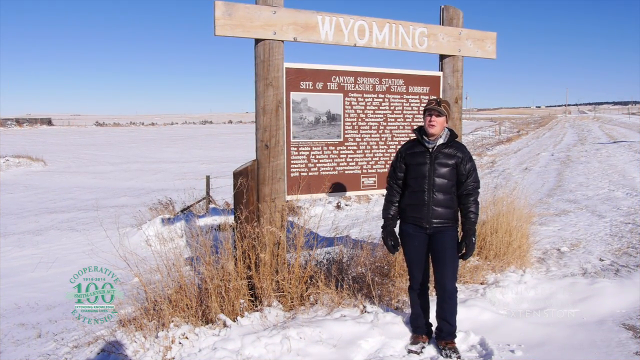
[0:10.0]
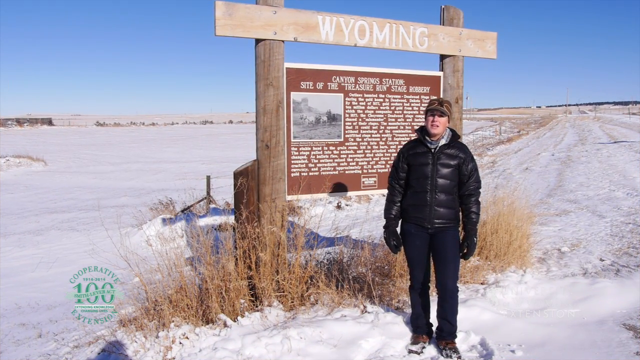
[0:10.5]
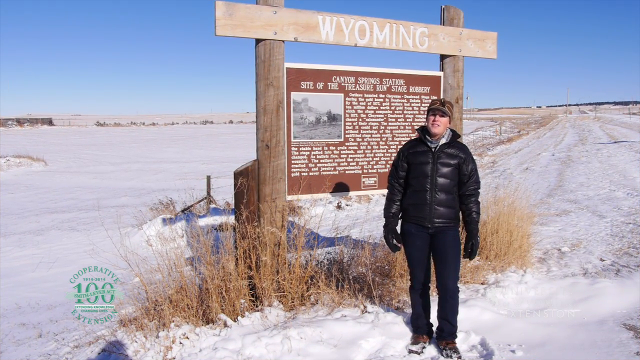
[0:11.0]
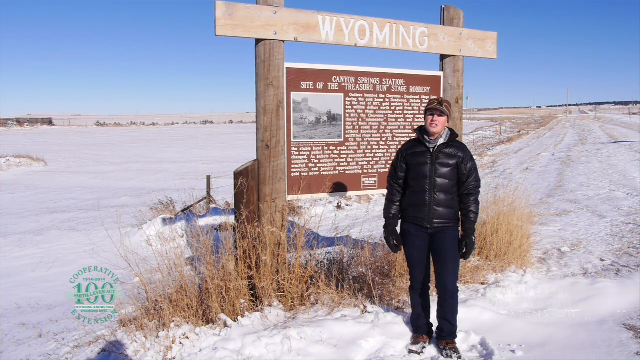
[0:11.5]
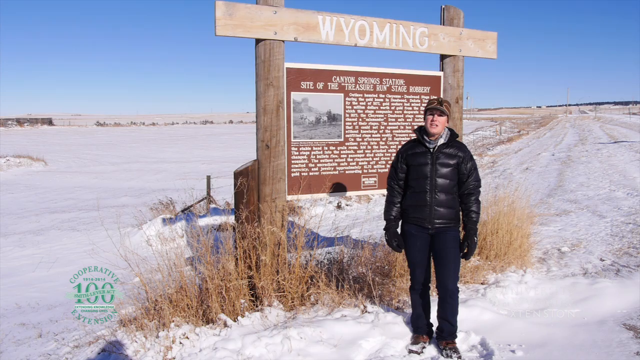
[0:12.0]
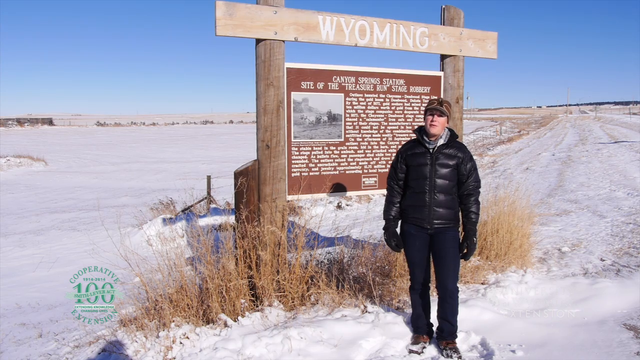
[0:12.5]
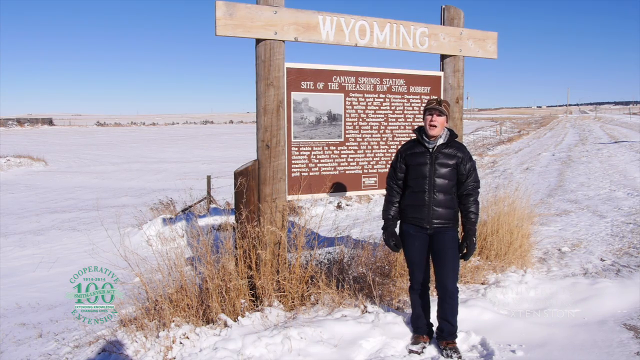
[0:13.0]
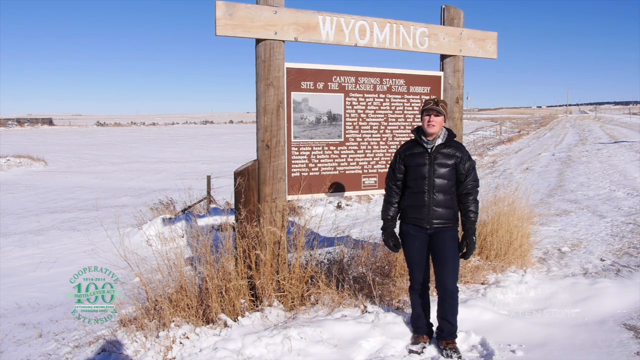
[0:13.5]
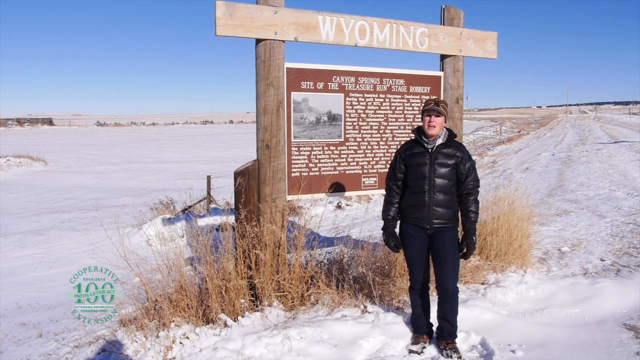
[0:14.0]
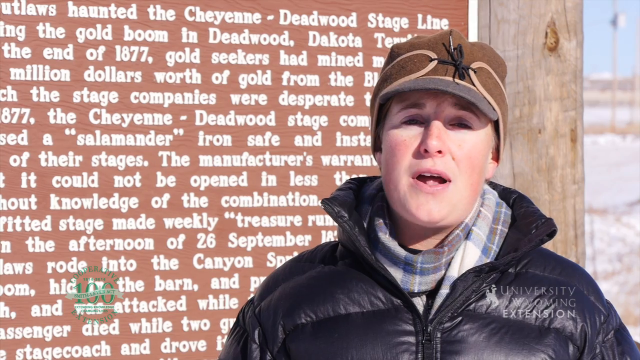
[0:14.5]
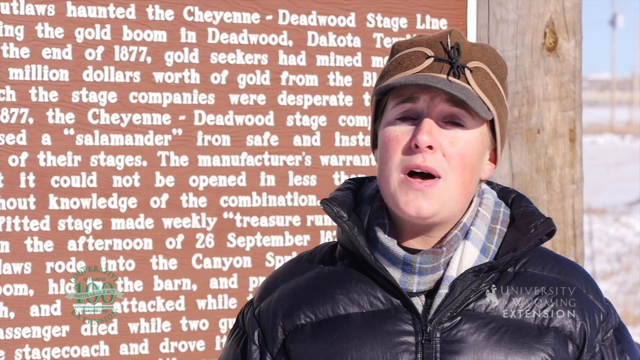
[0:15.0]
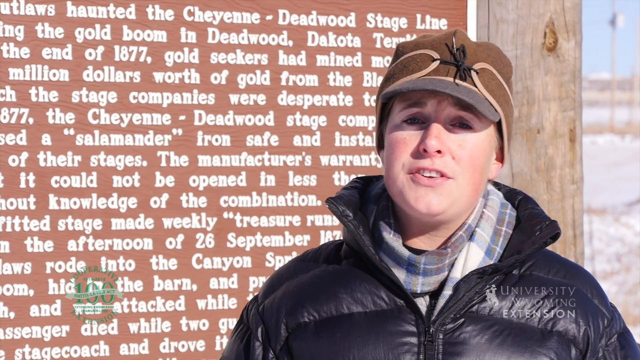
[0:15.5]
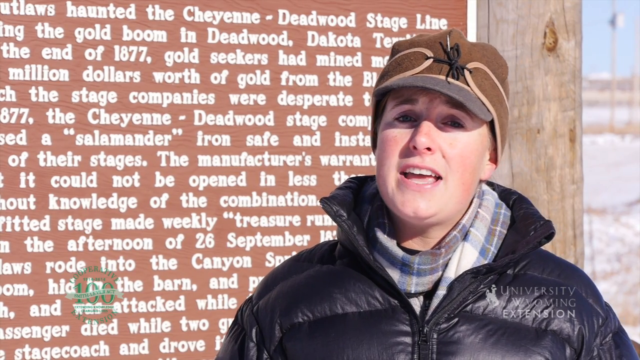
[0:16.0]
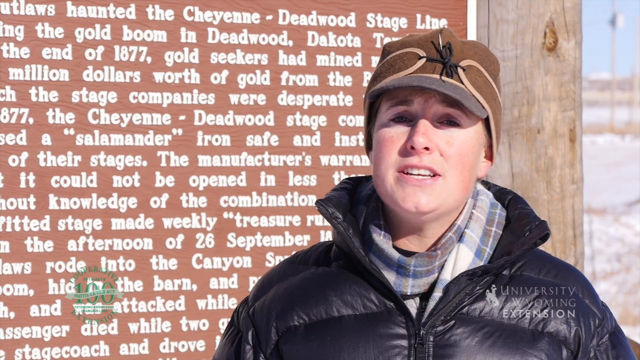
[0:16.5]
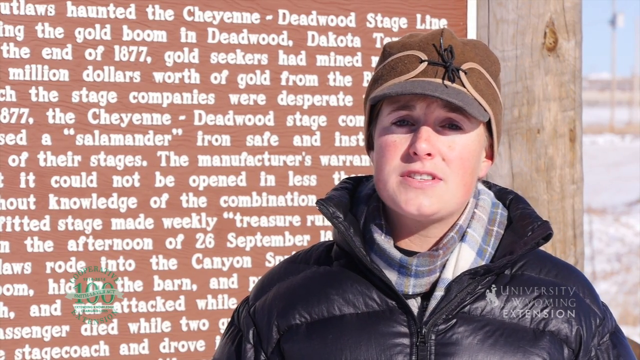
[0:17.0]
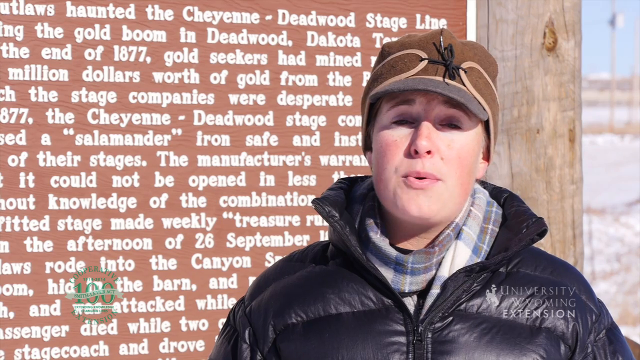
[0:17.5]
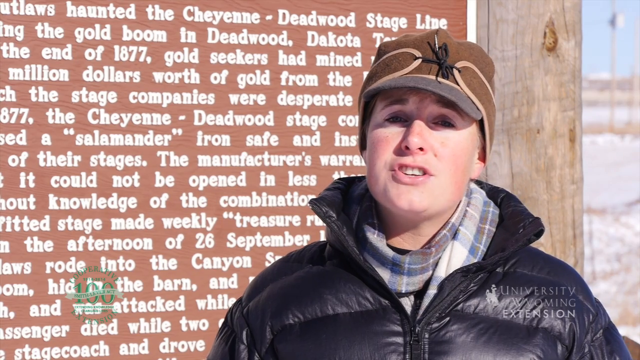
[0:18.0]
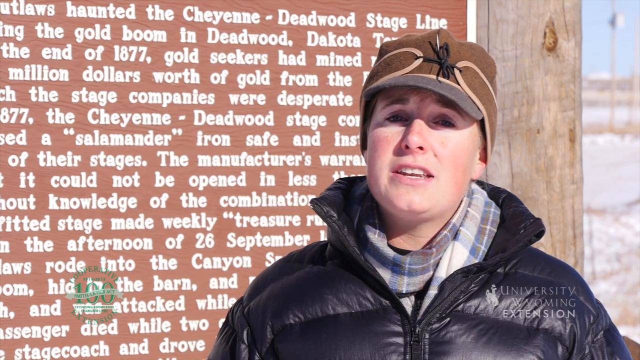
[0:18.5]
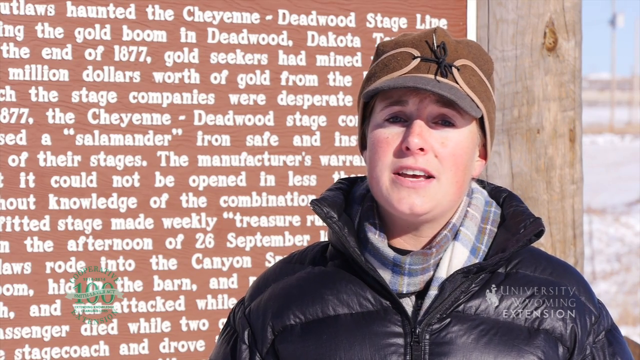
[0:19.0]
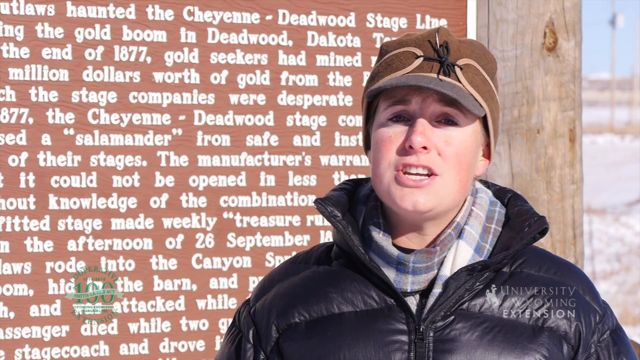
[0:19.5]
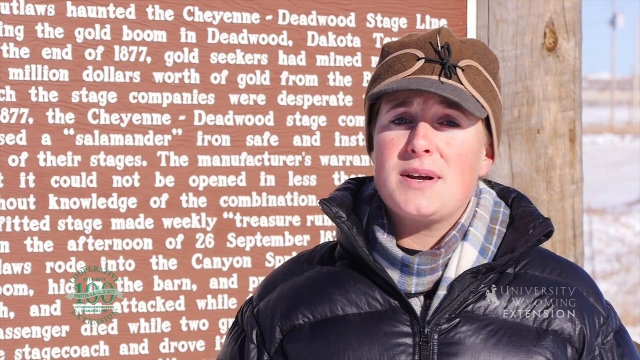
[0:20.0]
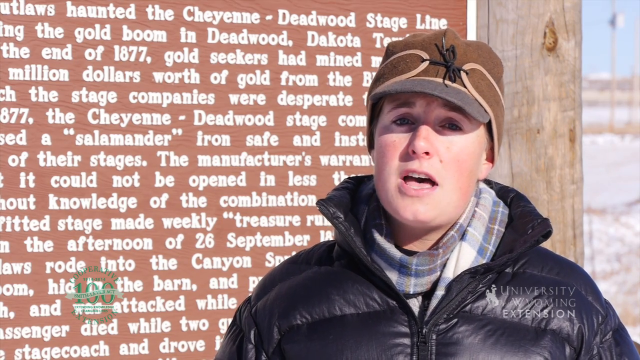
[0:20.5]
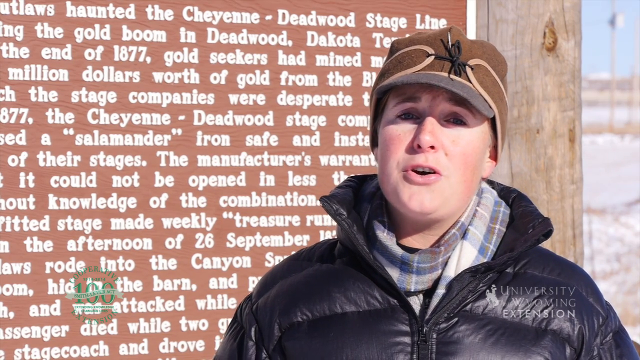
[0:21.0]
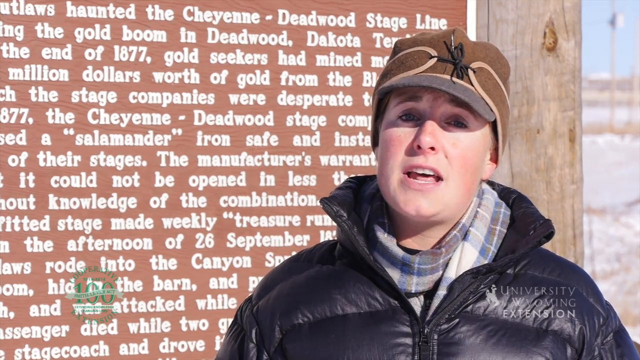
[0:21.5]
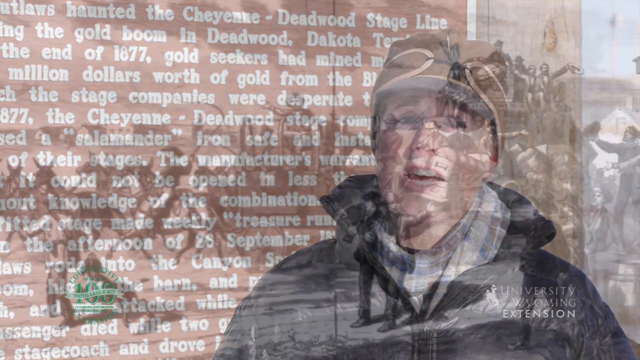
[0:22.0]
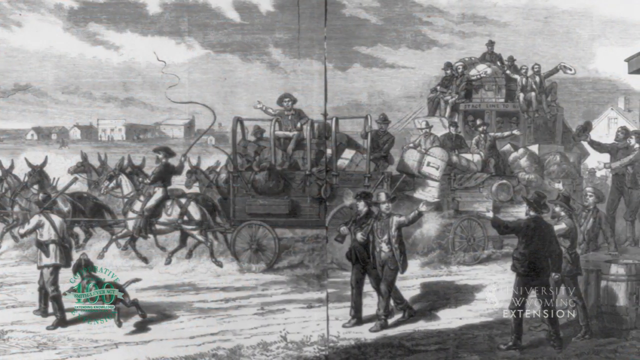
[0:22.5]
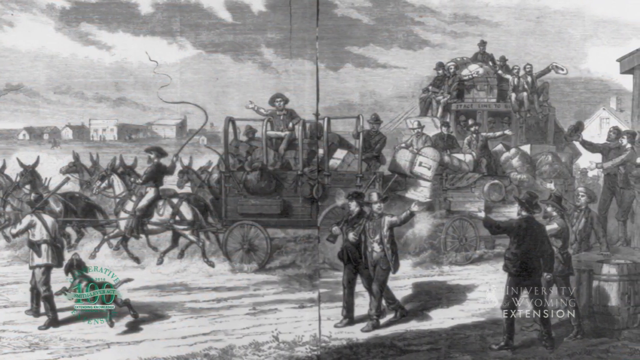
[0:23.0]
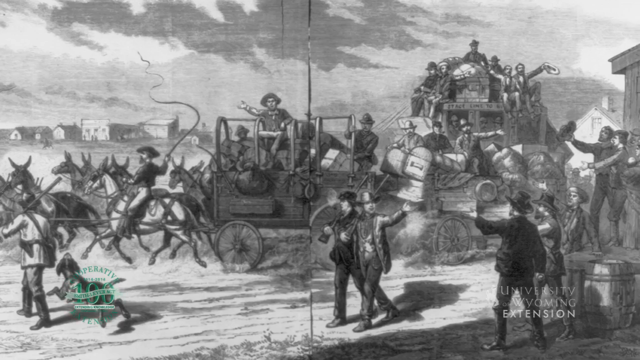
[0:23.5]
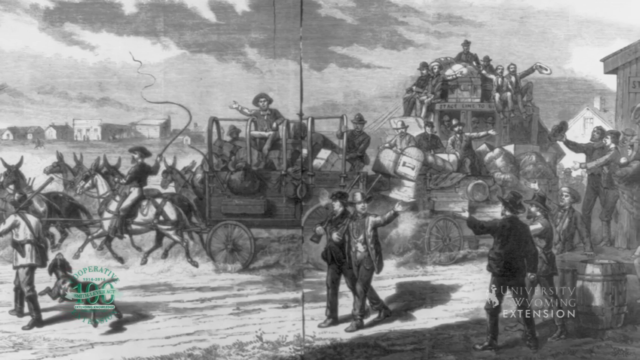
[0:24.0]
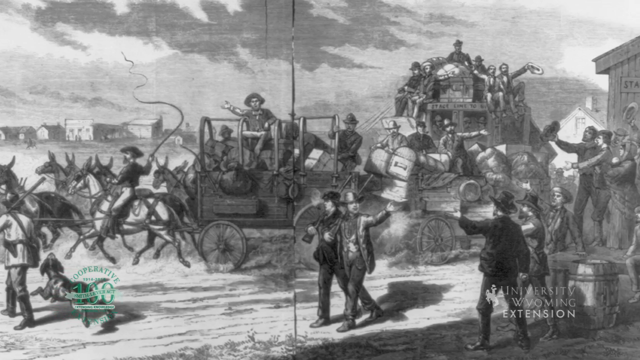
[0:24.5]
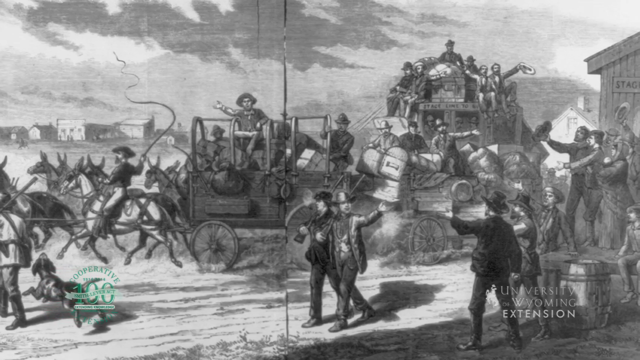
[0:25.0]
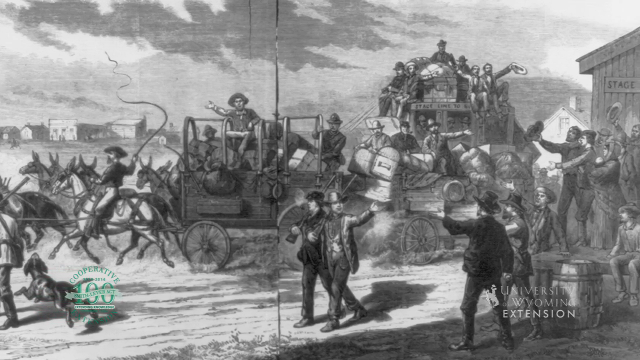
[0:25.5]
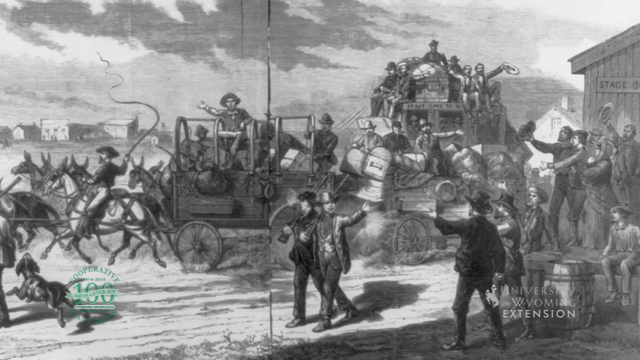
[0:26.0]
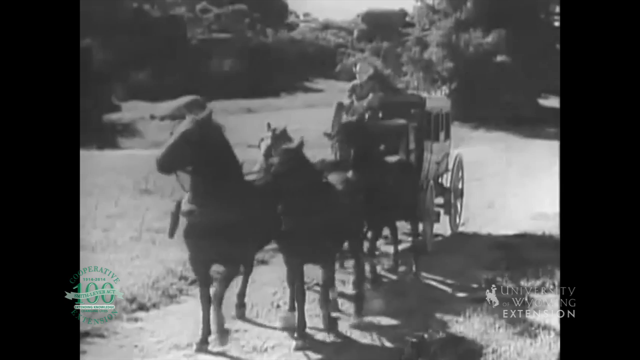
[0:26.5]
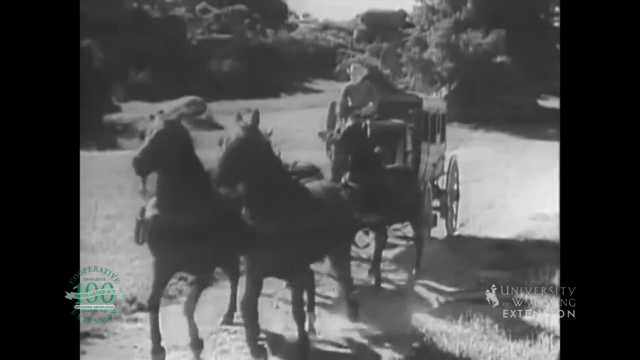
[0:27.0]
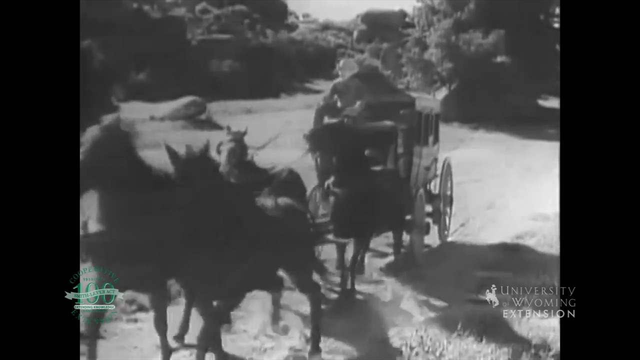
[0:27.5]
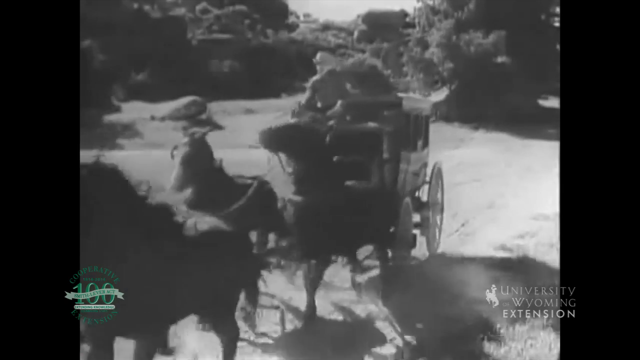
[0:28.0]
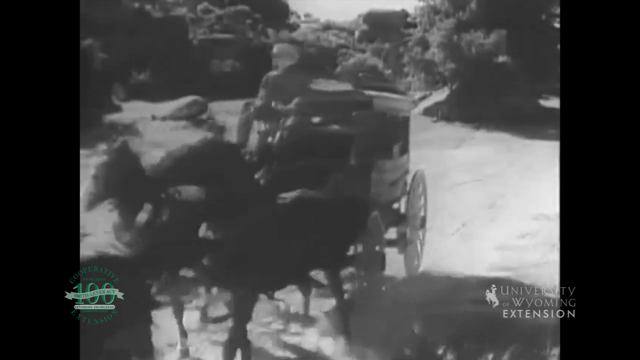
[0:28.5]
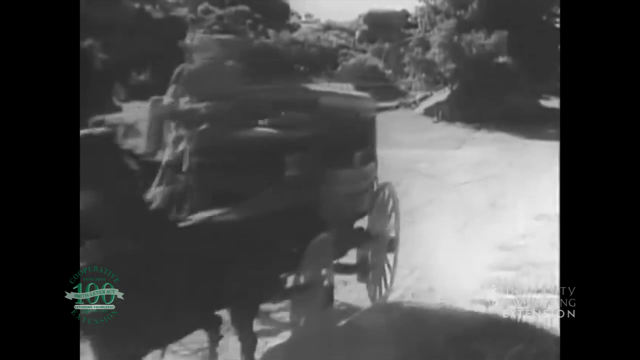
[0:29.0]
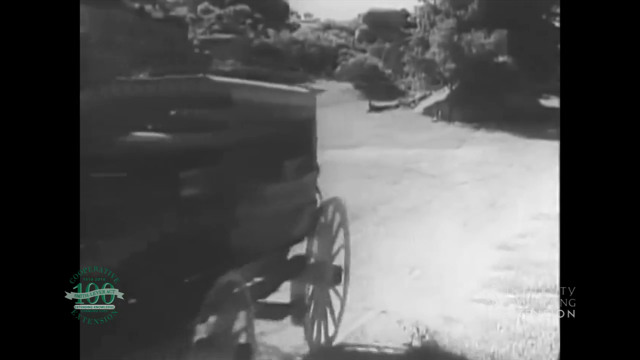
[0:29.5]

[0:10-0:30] The person continues to stand in front of the sign in a very rural spot. The shot switches to a close-up, and the person appears to be a woman rather than a man. She is in front of a sign with a little story on it that seems to have to do with Cheyenne and Deadwood, mentioning Deadwood, Dakota, 1877, and gold seekers. She wears a zipped-up, collared puffer jacket, a blue-grayish plaid scarf, and a brown cap outlined in beige that is not a baseball cap, with two pieces that come from the back and tie in the front. The close-up shows her and the sign, and she looks like she is sitting there talking. The video then switches to a very old black-and-white picture that looks to be from the Wild West, and then to a man driving a carriage pulled by four horses; he sits on top of it, kind of holding a whip, as he drives them.